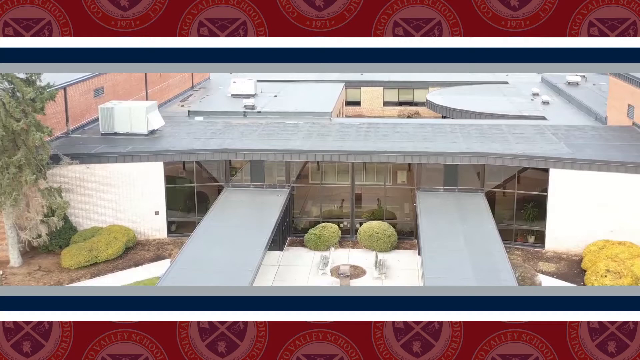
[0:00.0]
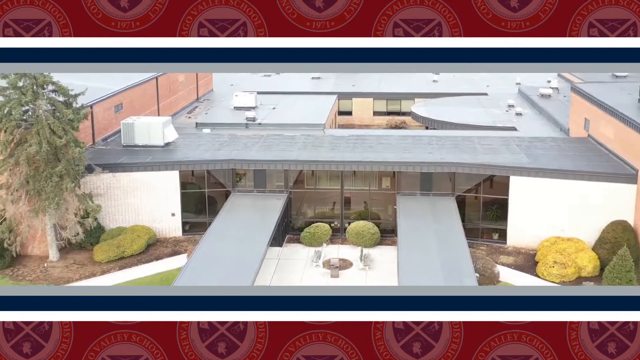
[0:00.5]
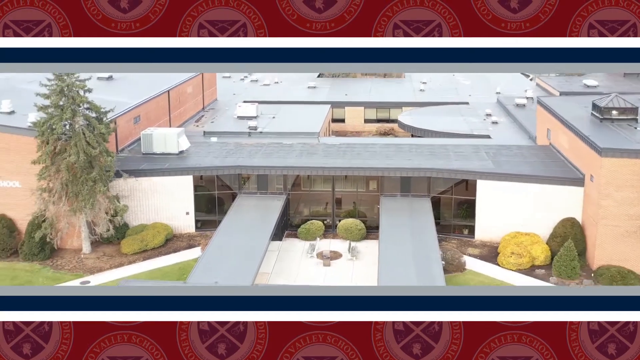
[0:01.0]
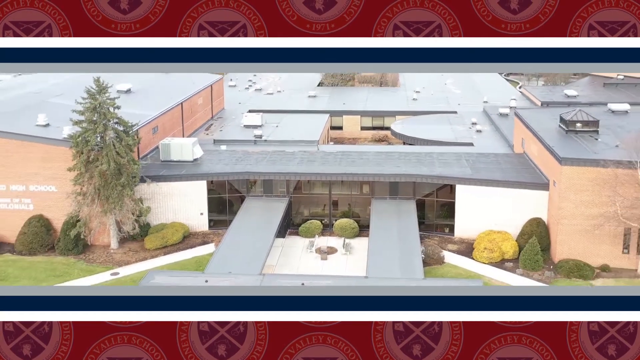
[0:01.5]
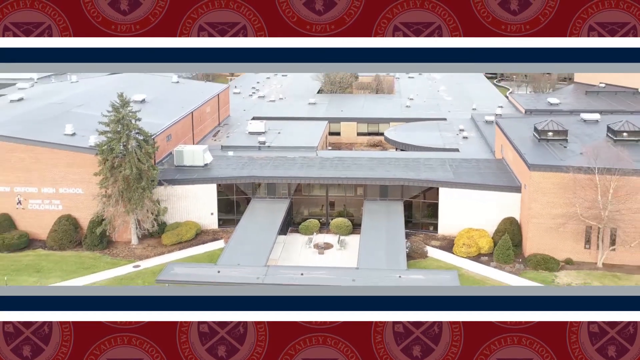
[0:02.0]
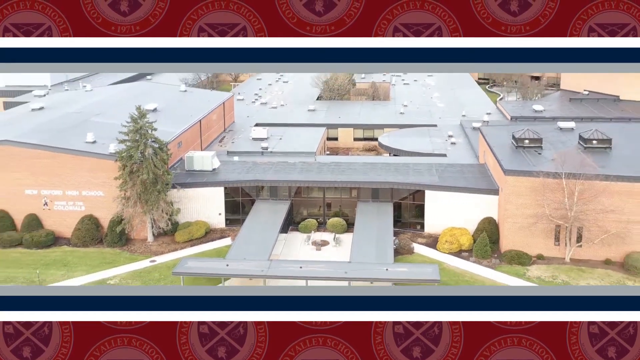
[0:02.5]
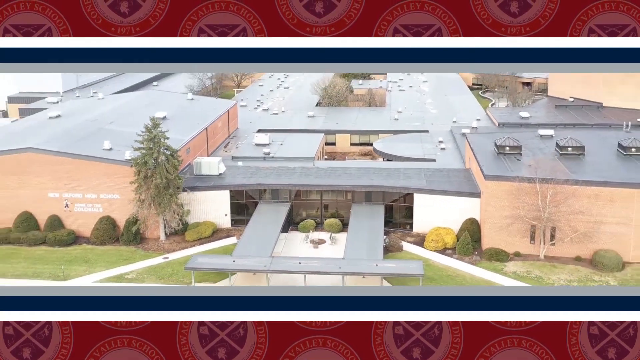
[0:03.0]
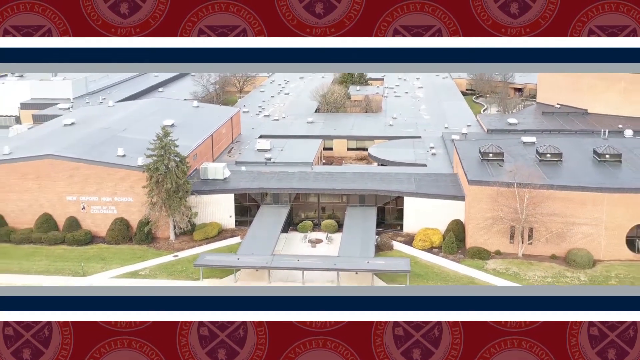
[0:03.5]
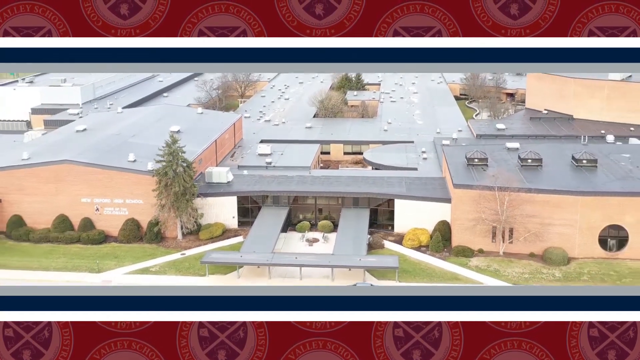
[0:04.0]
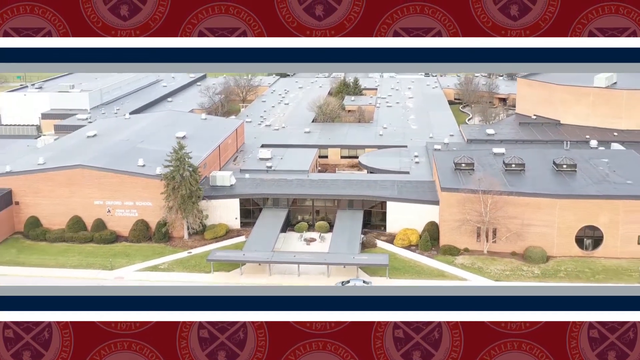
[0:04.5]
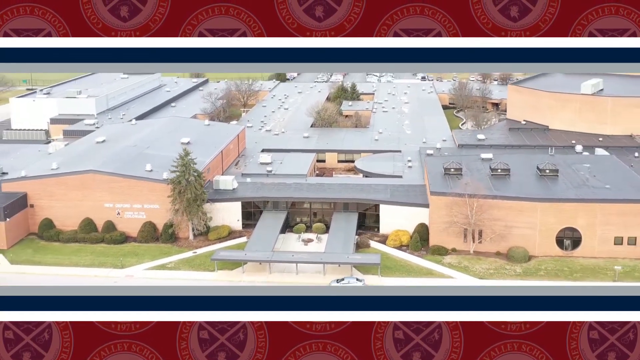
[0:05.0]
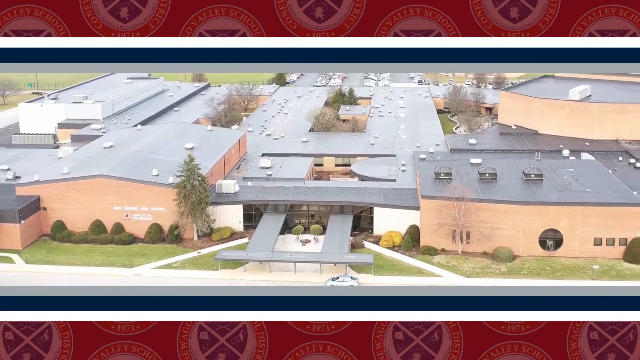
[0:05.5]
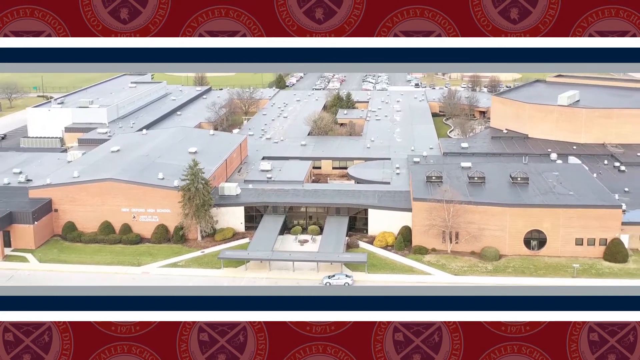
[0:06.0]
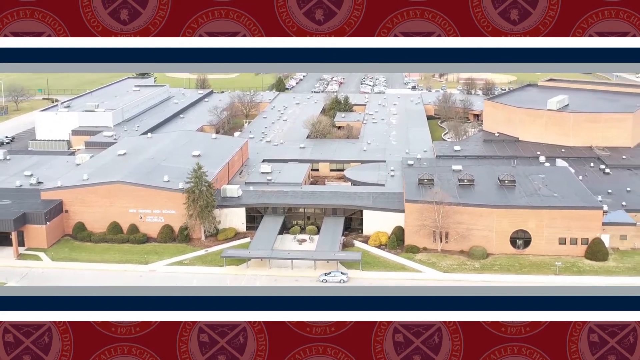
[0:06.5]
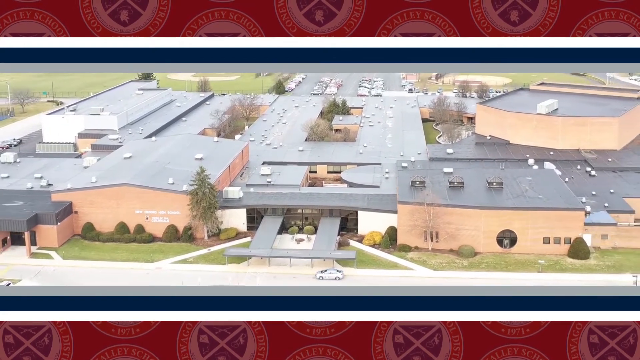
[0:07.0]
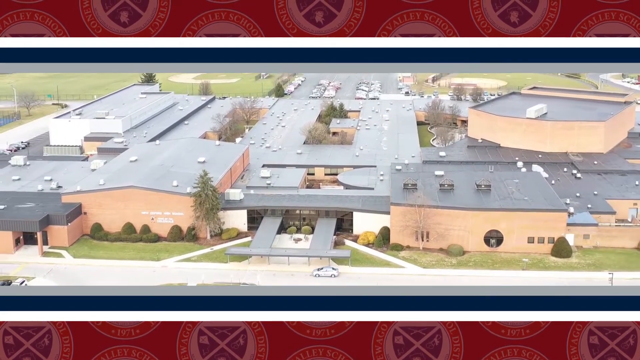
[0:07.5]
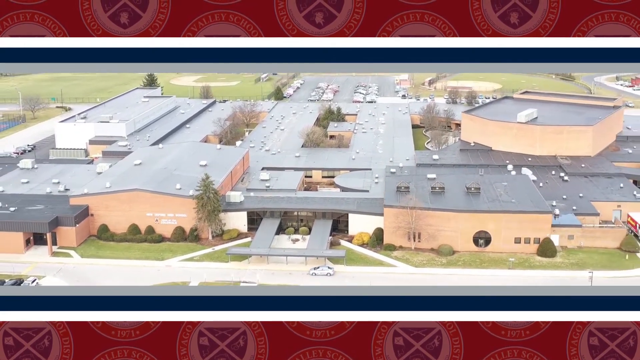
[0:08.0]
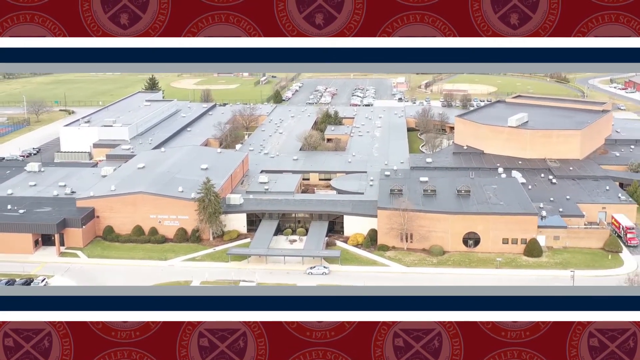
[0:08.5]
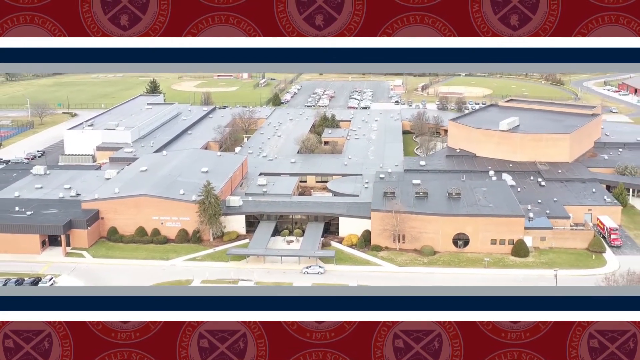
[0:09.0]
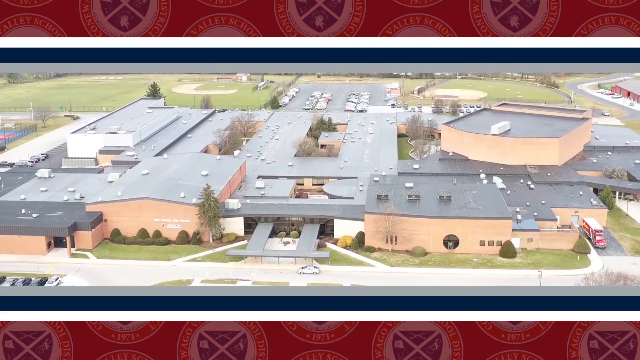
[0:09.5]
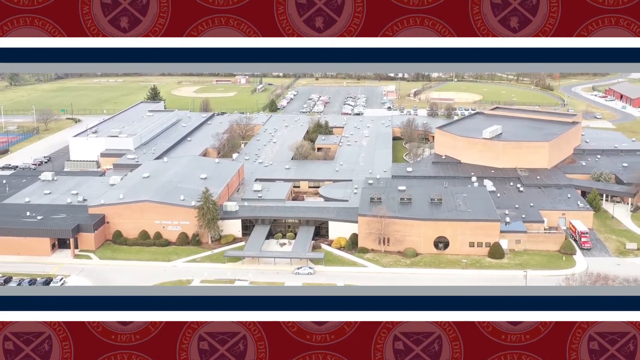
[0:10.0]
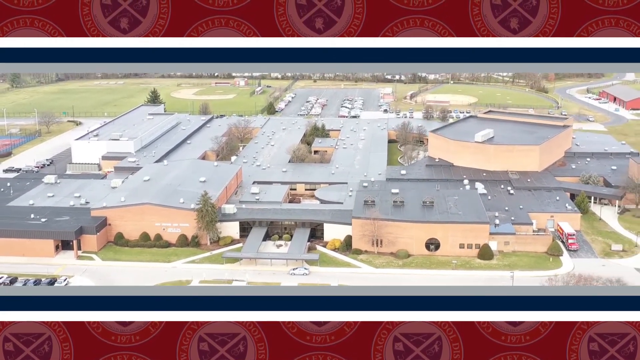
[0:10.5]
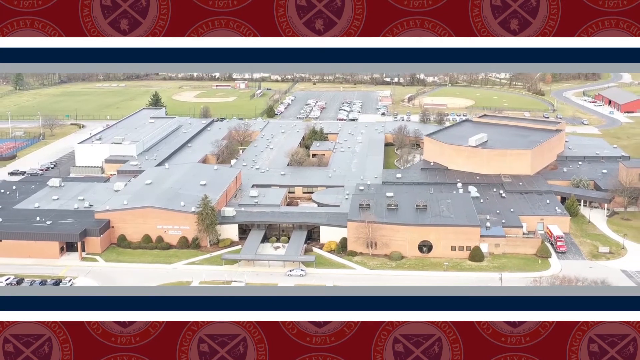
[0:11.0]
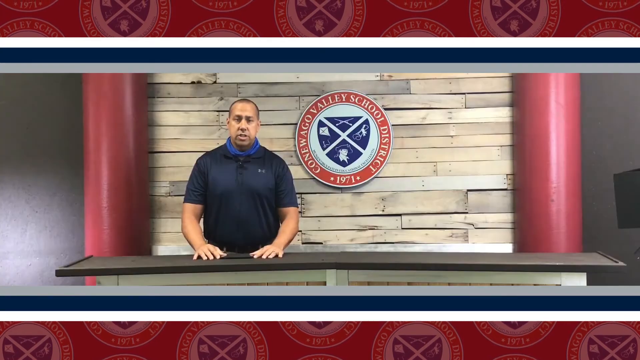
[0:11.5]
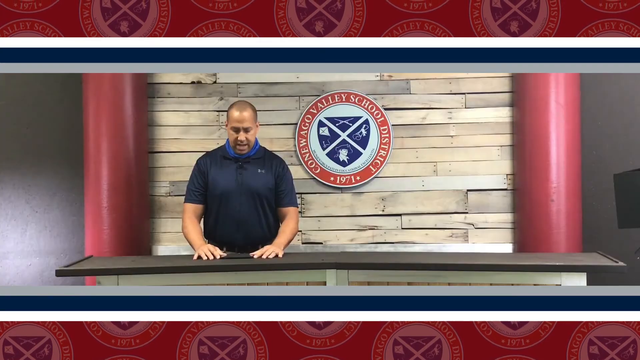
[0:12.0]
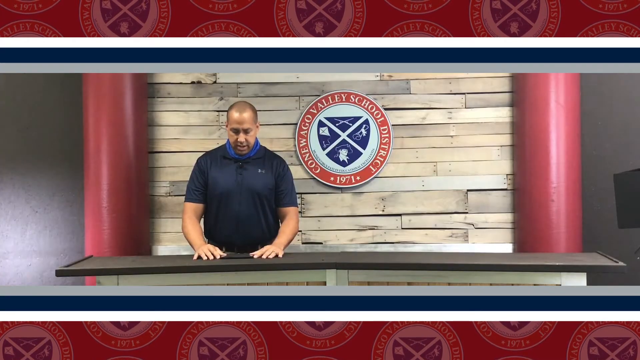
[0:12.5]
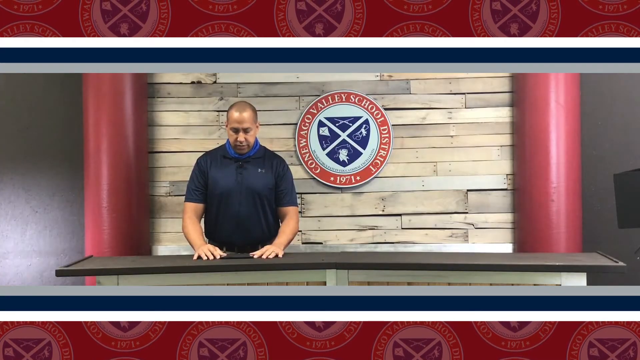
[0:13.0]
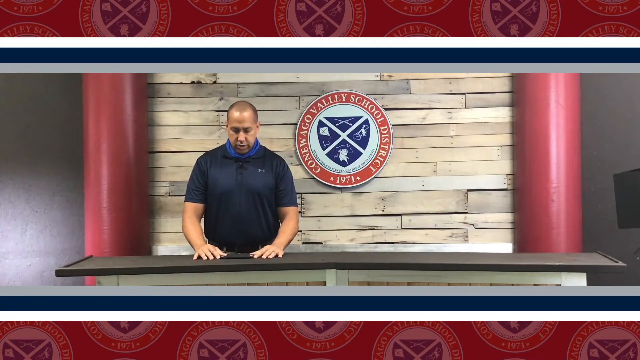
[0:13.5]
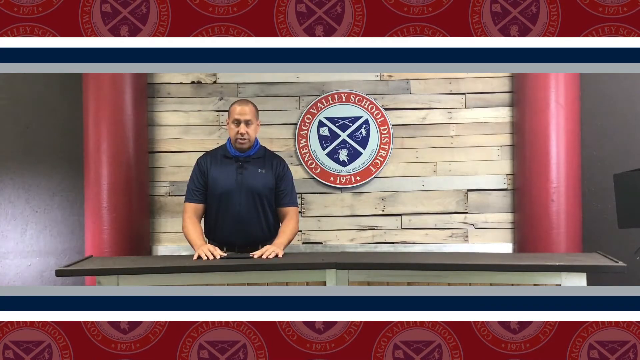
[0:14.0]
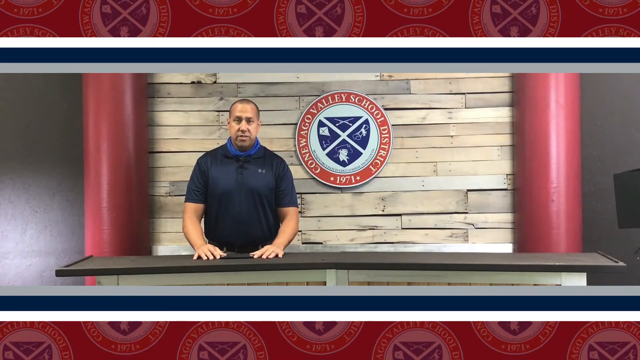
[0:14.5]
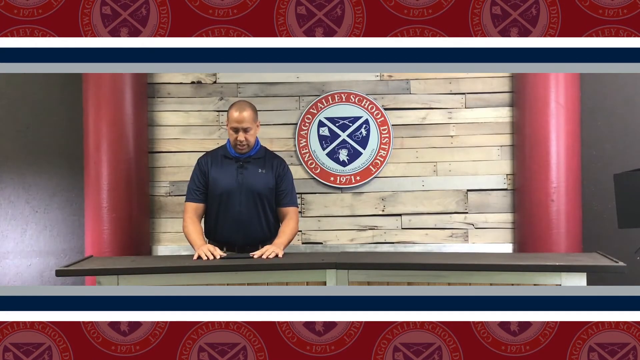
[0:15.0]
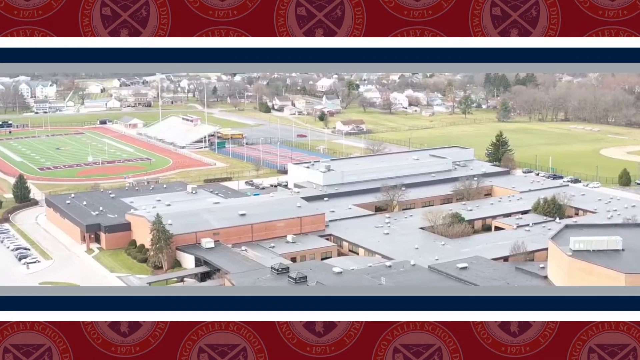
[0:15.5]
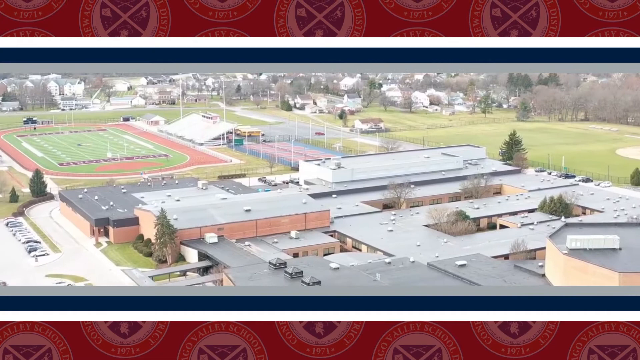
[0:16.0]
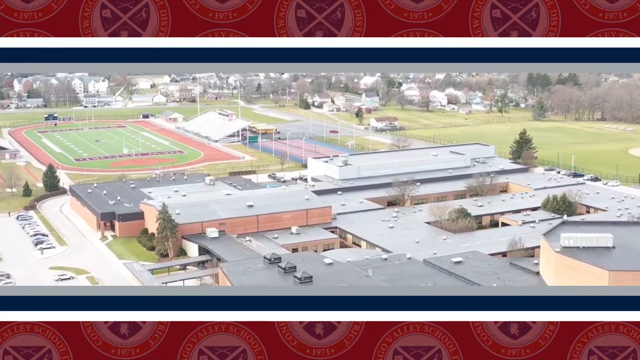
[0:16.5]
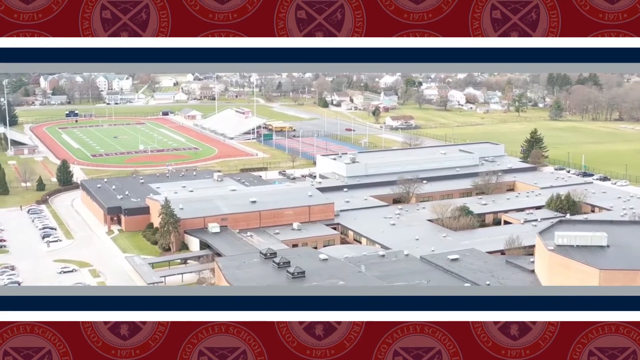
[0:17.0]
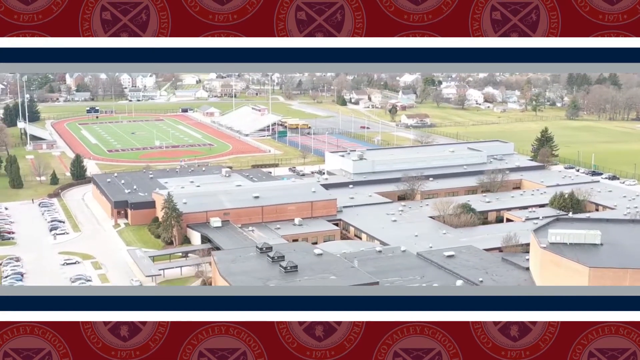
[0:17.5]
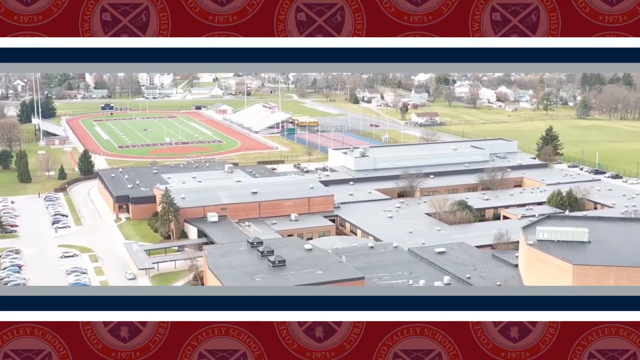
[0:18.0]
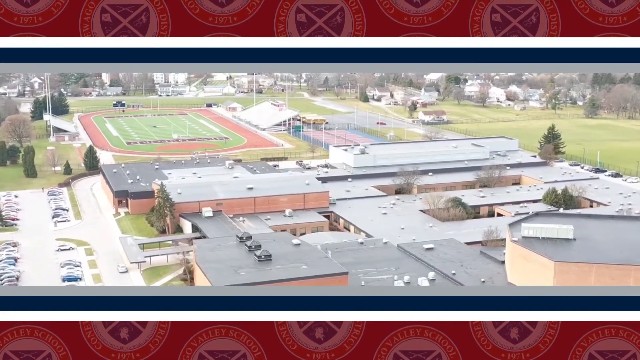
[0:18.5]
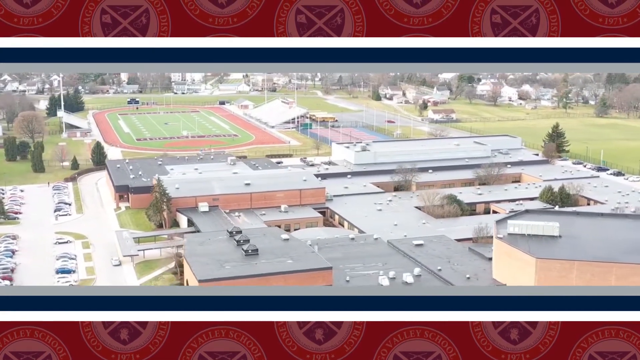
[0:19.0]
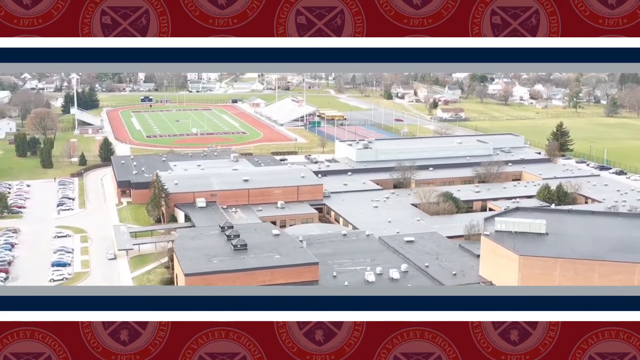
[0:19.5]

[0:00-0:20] An aerial view shows a large building complex, and the view zooms out further to show its full extent. One smaller building in the center is flanked by two larger buildings. In different places there are small open sections of the building showing outdoor courtyards with trees and grass. To the right side of the building there appears to be a large red truck parked in a driveway. A road leads around the front of the building, and in the back there is a very large parking lot. There appears to be another parking lot down to the bottom left, only partially visible. After a few moments the video transitions to what appears to be the interior, where a man stands at a counter with his hands placed on it. Up behind him is a wood wall with a logo on it, showing text in a circle around an image of a shield. The man speaks for a moment, and then the video transitions back to an aerial view of the complex, now rotated around to the right, showing a large football field and what appears to be a tennis court to the left side of the complex.